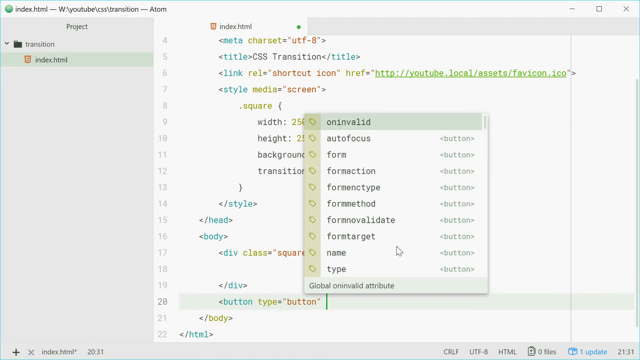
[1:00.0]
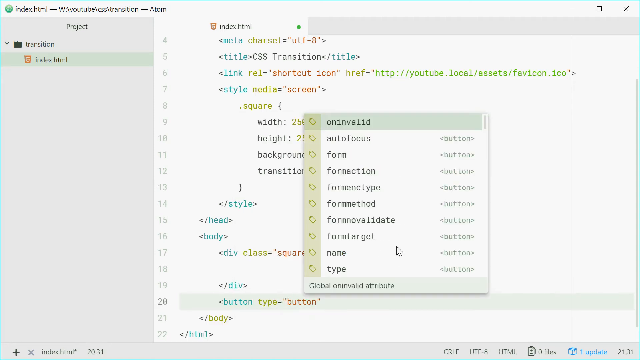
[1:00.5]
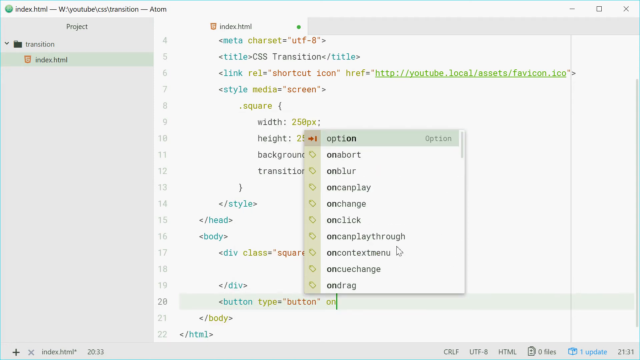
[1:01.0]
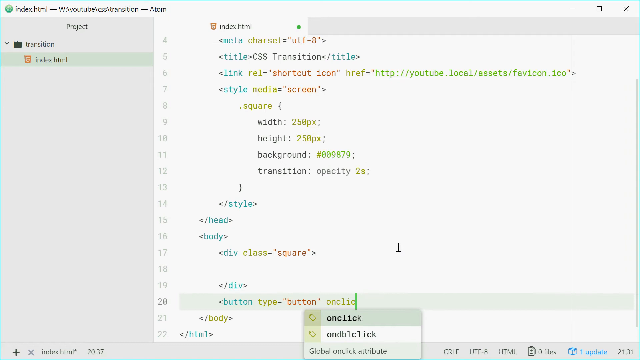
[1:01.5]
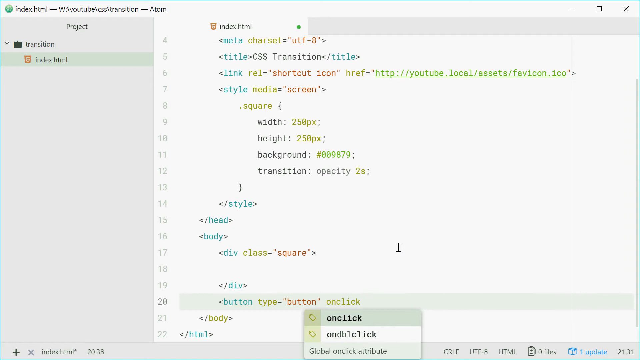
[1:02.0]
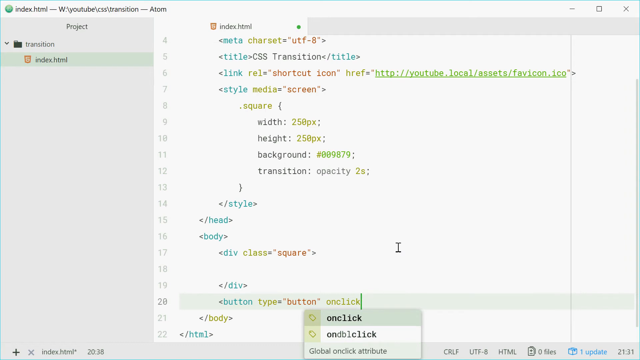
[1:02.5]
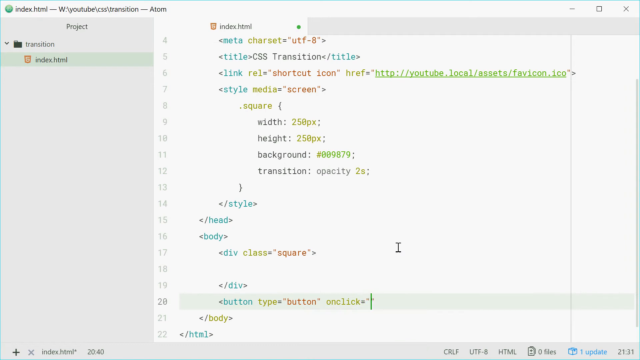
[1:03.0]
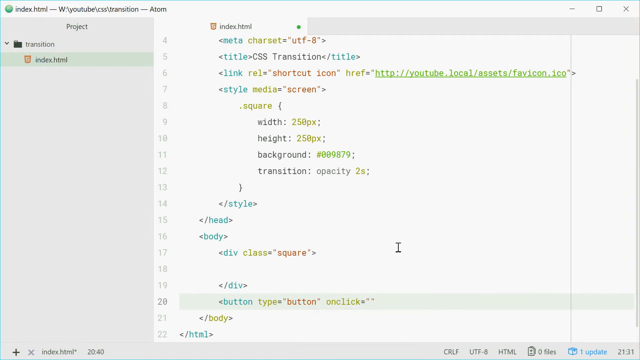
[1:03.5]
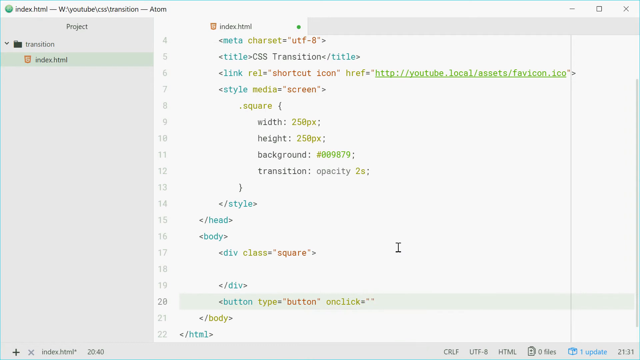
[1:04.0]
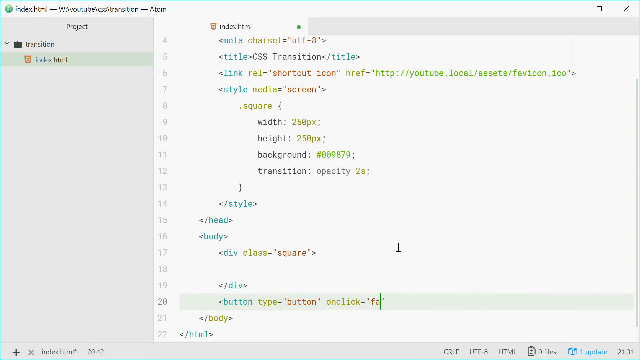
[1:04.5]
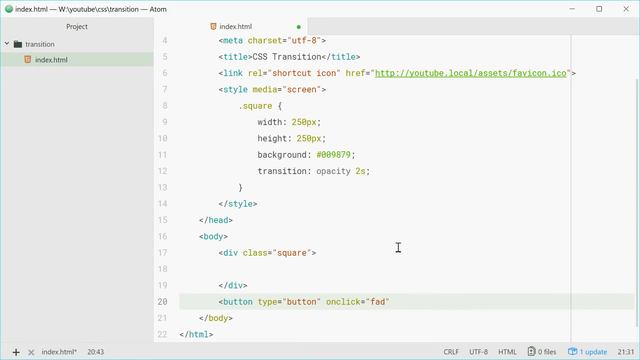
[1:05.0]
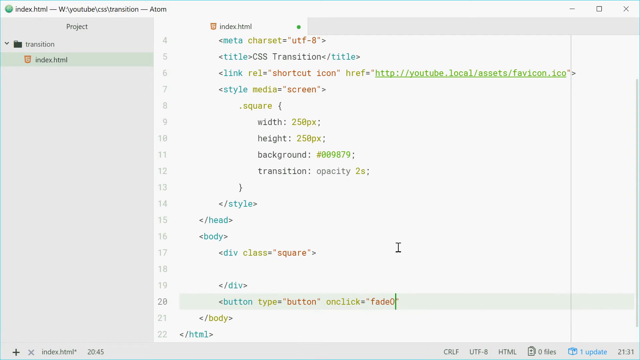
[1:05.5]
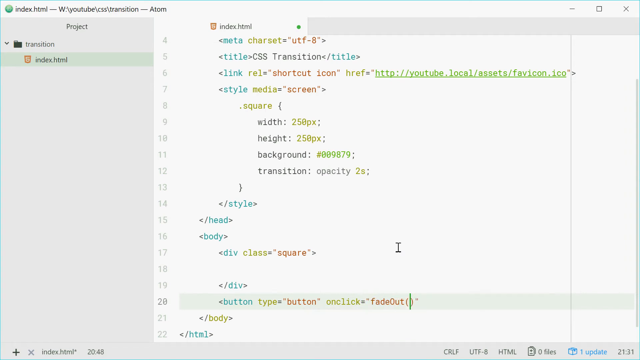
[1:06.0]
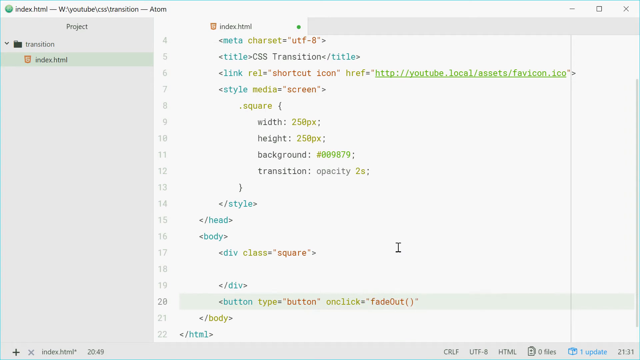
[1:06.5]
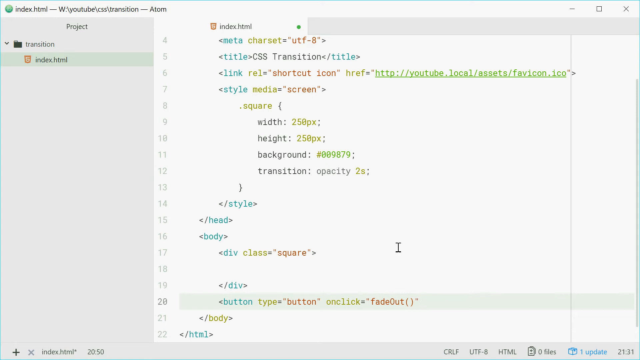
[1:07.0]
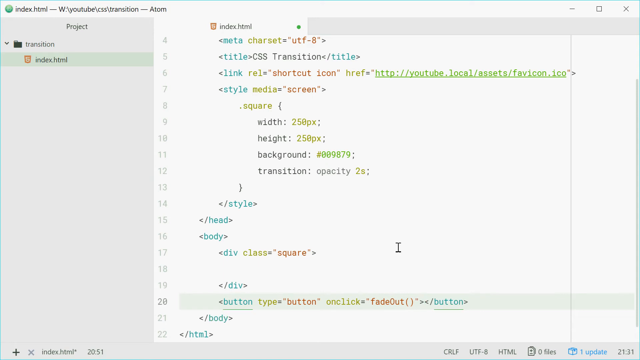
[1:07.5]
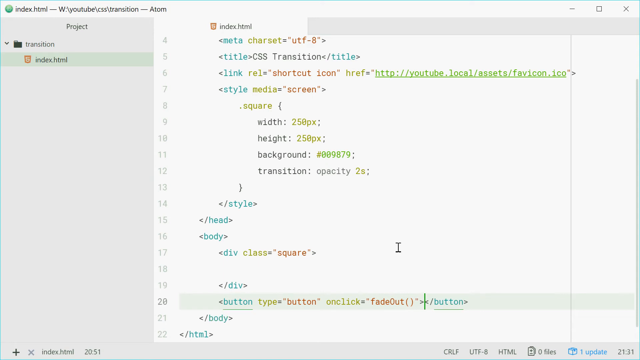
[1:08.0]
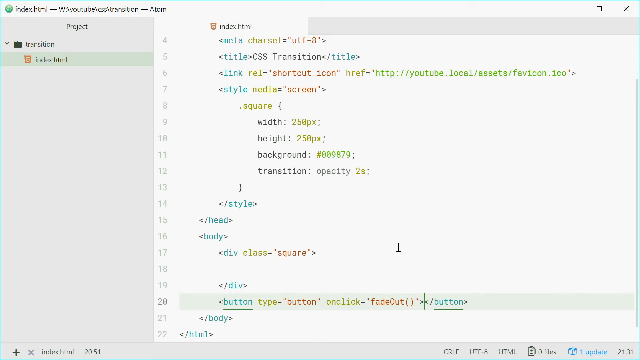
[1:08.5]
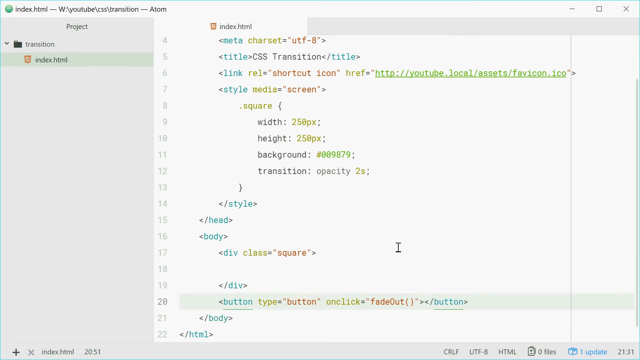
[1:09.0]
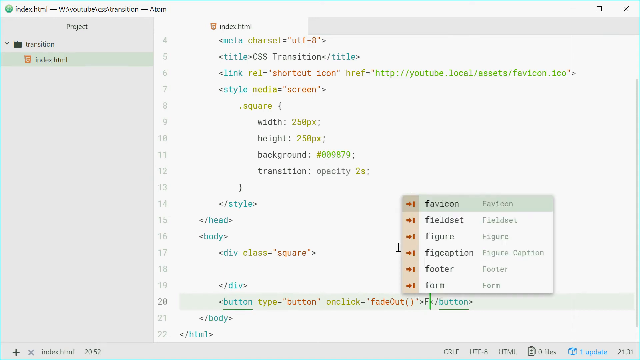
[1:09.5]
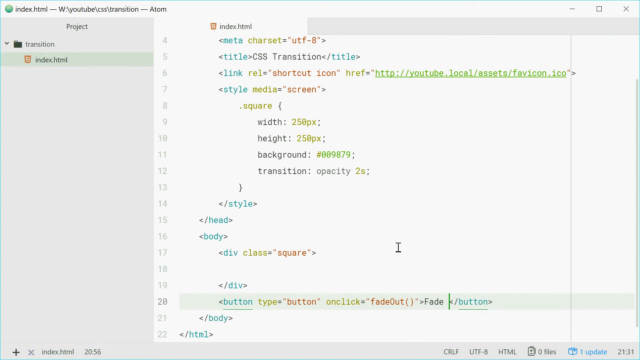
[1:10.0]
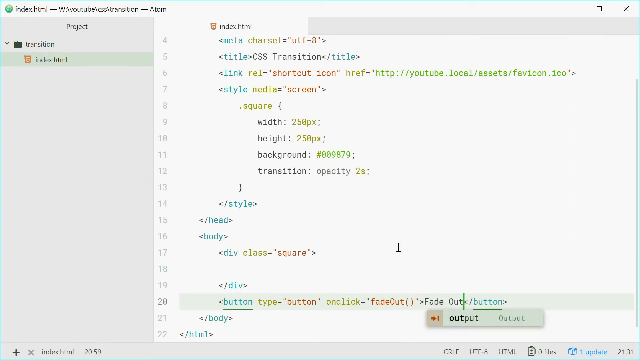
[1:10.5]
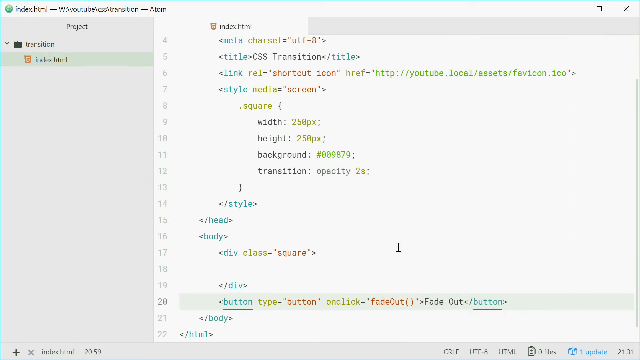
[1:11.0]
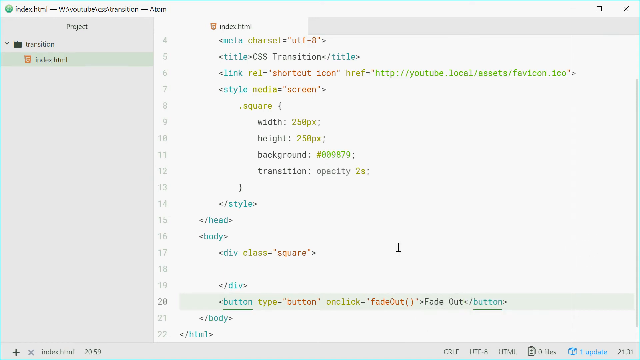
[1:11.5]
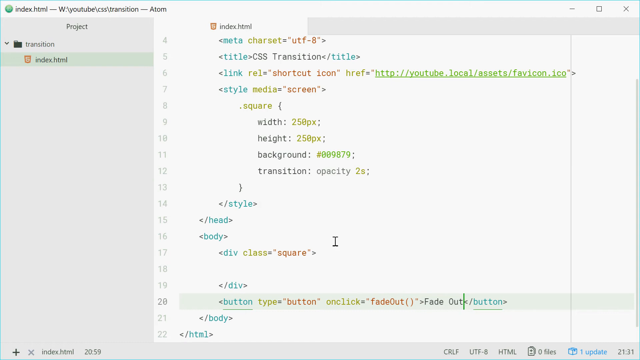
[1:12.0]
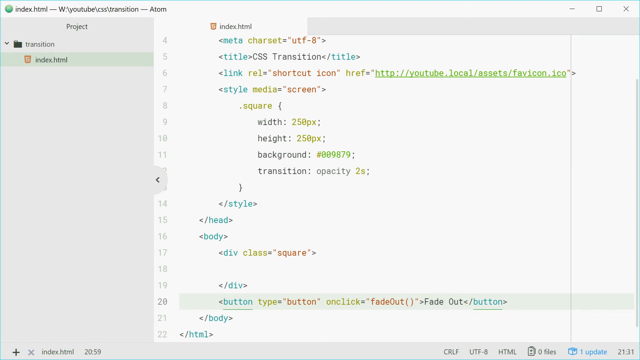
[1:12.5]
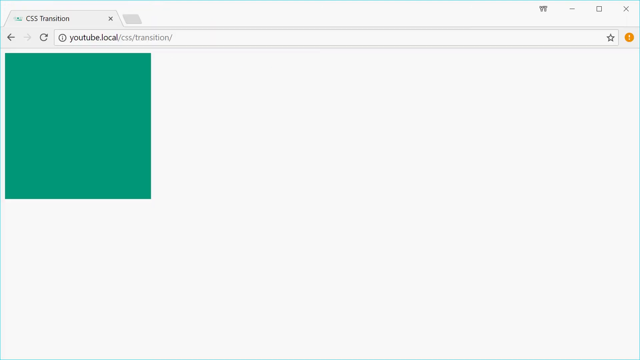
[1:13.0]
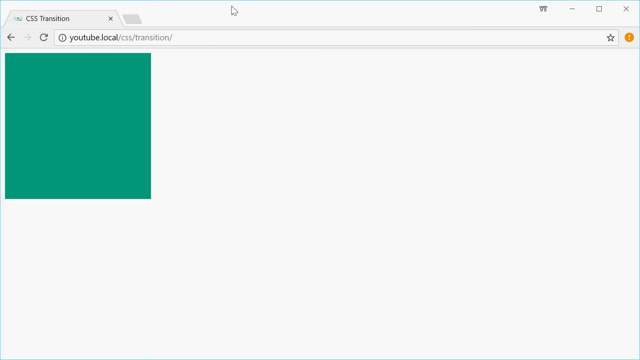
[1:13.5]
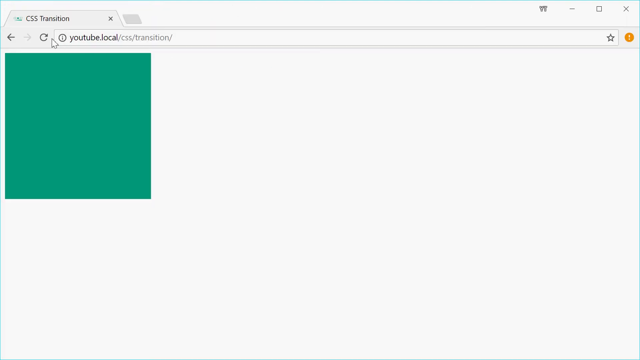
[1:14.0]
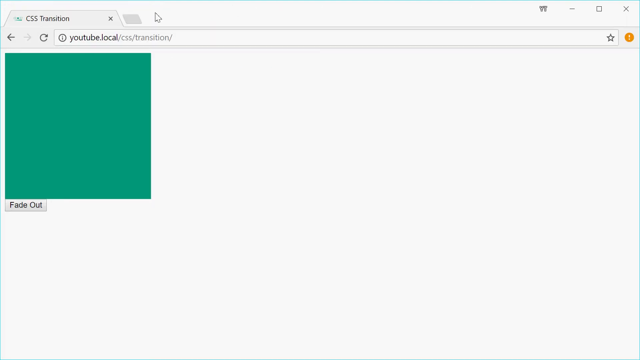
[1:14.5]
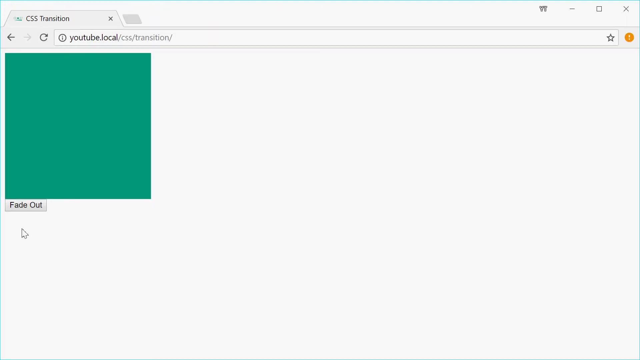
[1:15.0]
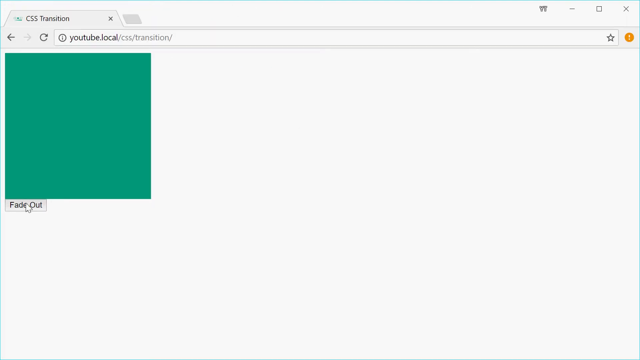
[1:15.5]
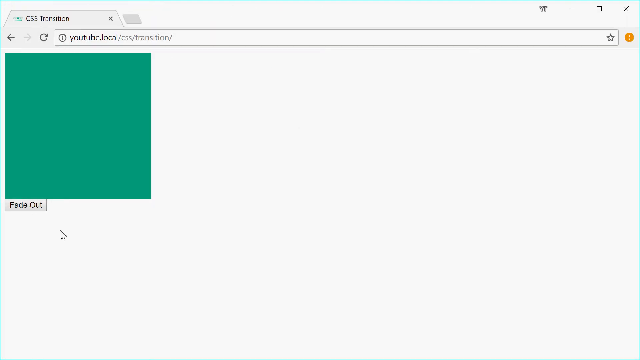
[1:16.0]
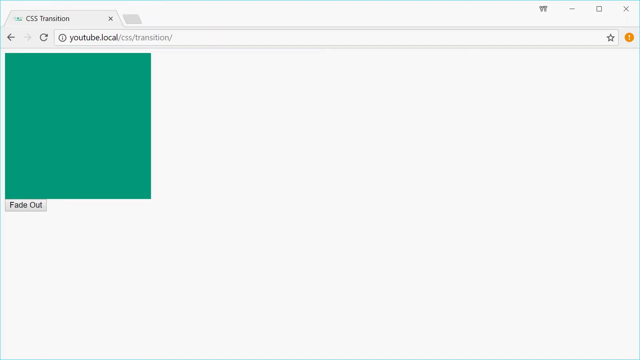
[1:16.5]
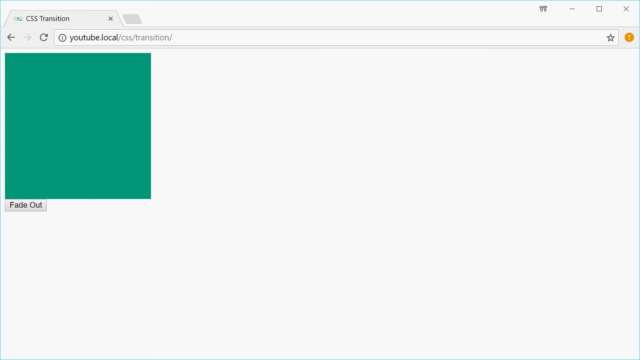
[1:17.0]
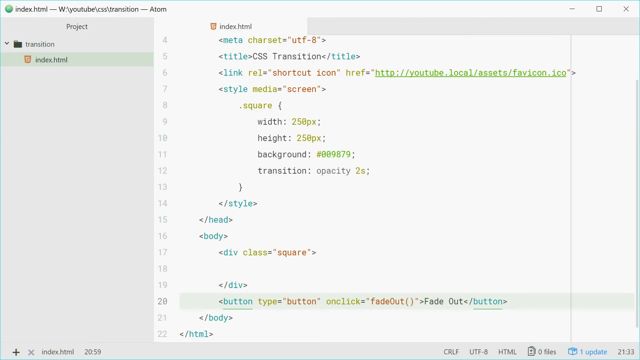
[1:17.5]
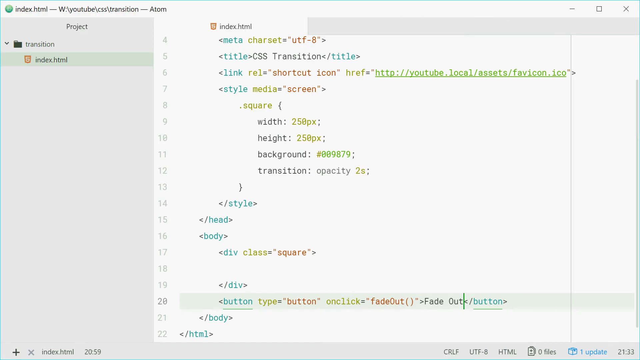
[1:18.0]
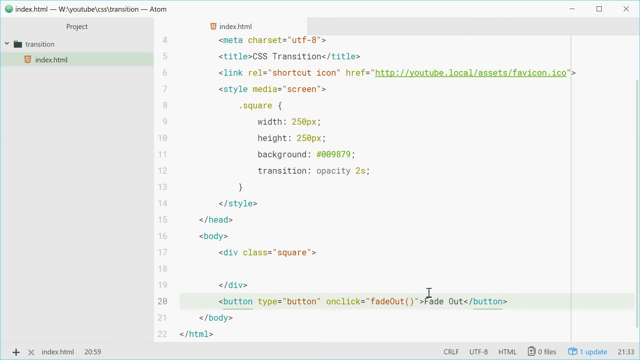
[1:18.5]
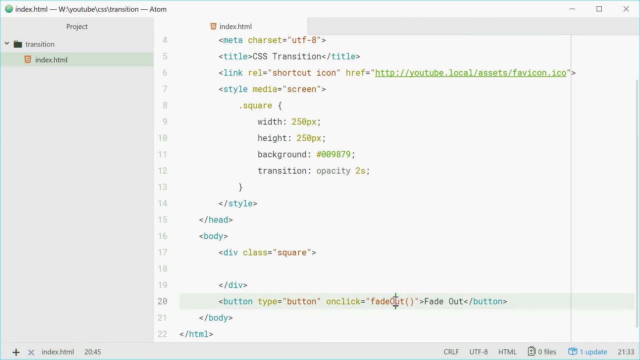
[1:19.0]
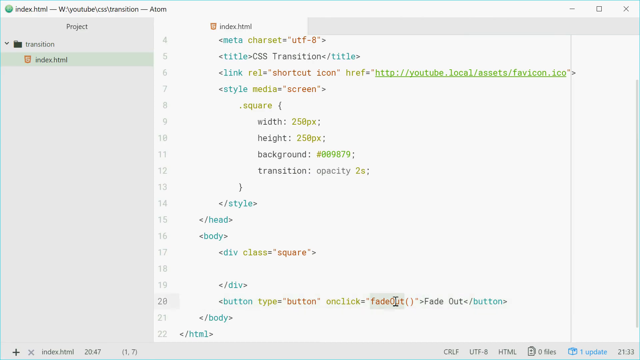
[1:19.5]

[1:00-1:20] The editor shows index.html, with the transition folder and index.html on the left side and the code on the right, and a YouTube local page tab is also open. A panel seems to be open with options such as invalid, autofocus and form. The man scrolls down and more options appear. In the code he adds a fade out button, then switches to the YouTube tab, refreshes and checks it. When he presses the fade out button, the green box just stays in place without moving much, so apparently nothing worked, and he goes back to the code as if about to edit it again.